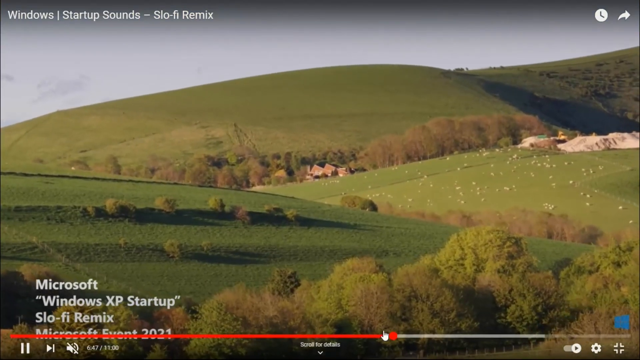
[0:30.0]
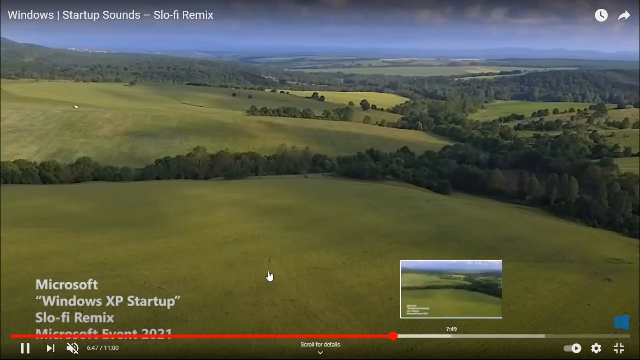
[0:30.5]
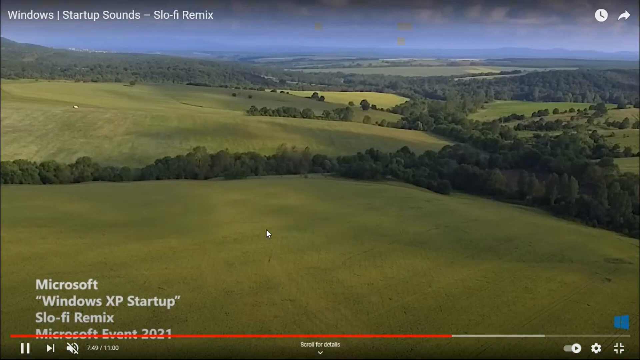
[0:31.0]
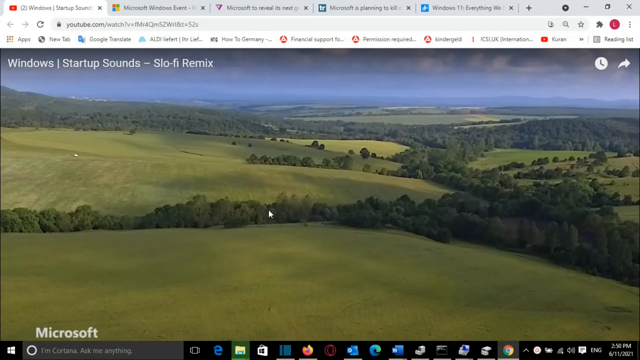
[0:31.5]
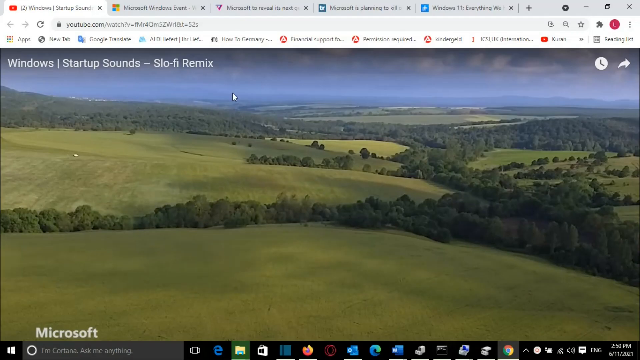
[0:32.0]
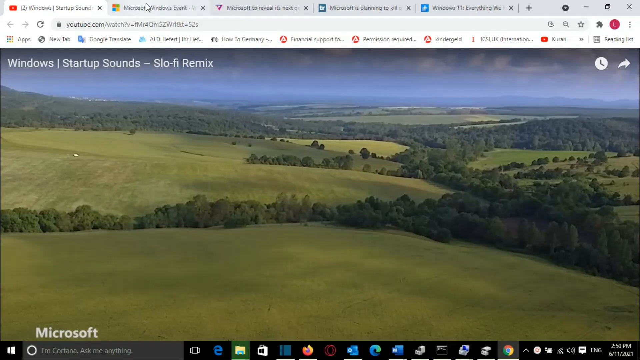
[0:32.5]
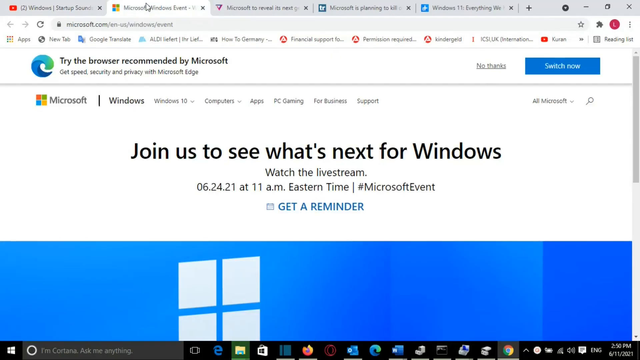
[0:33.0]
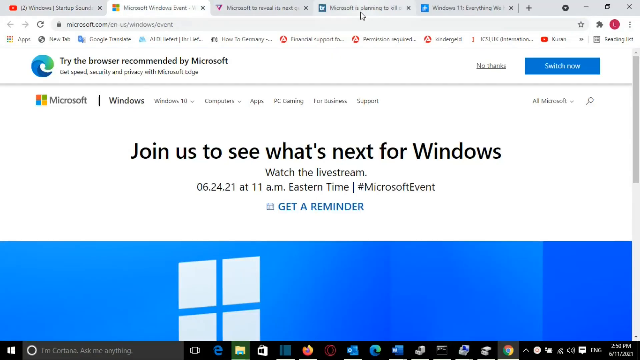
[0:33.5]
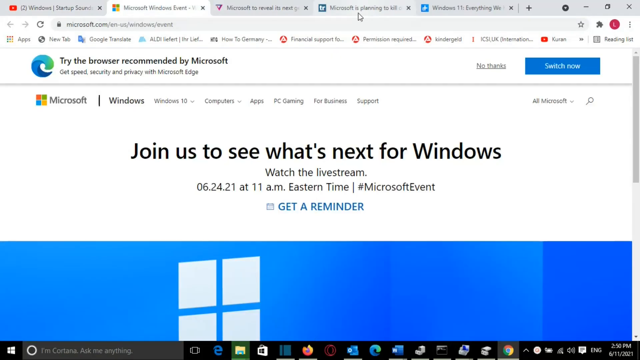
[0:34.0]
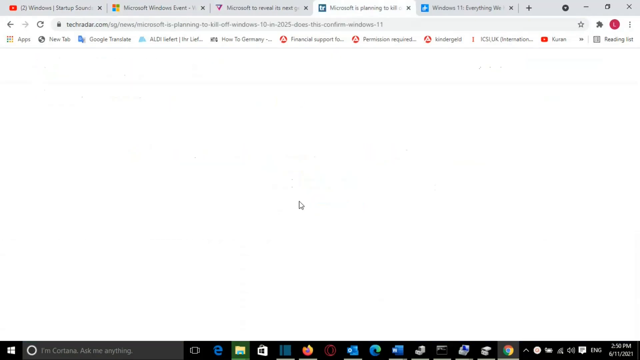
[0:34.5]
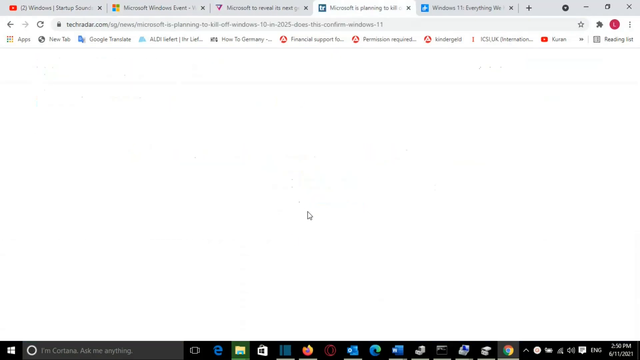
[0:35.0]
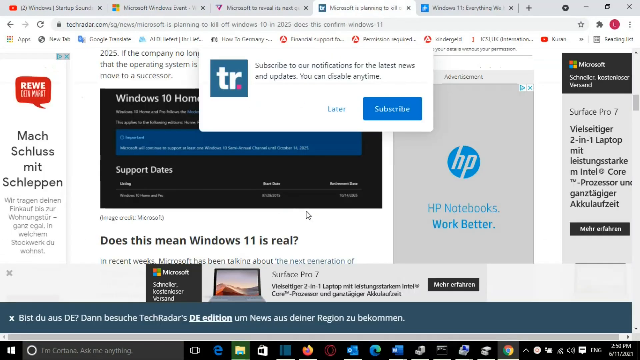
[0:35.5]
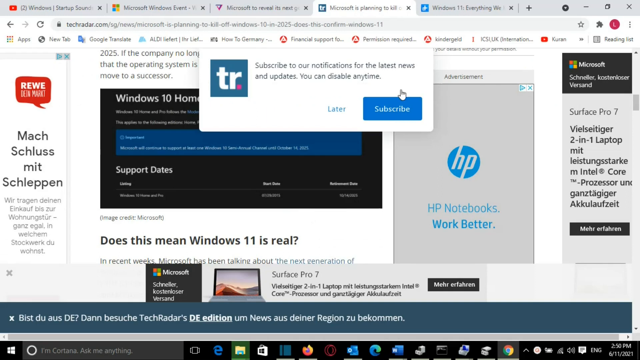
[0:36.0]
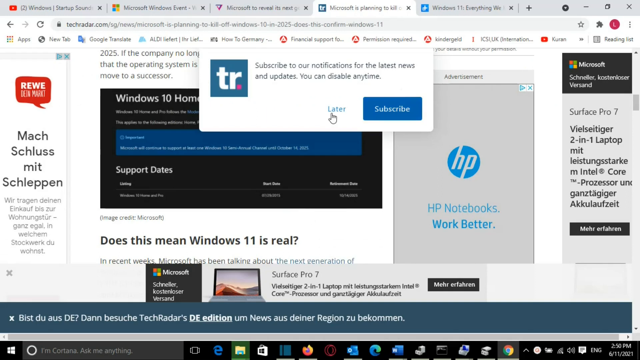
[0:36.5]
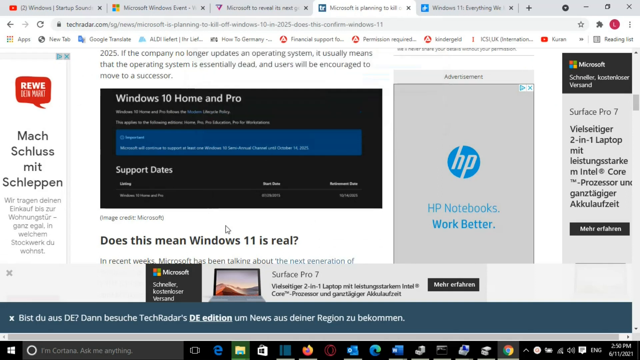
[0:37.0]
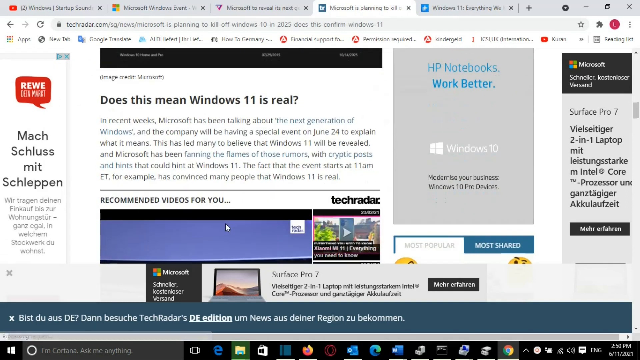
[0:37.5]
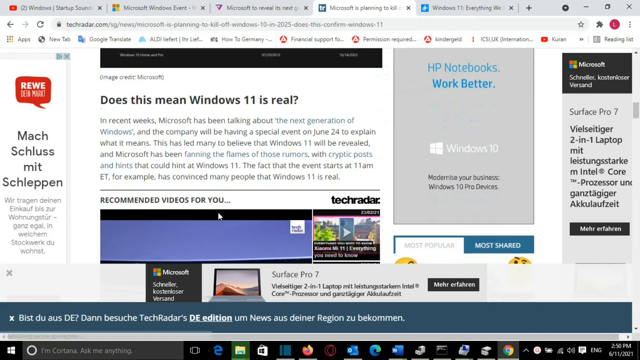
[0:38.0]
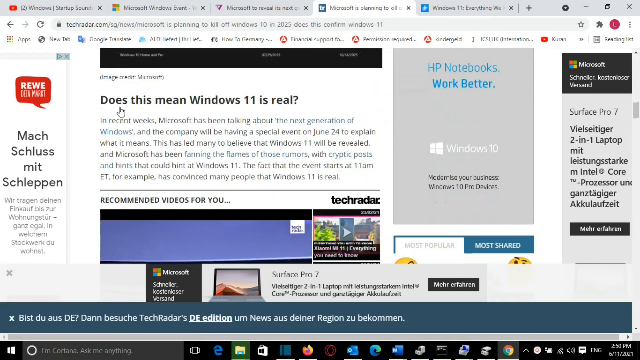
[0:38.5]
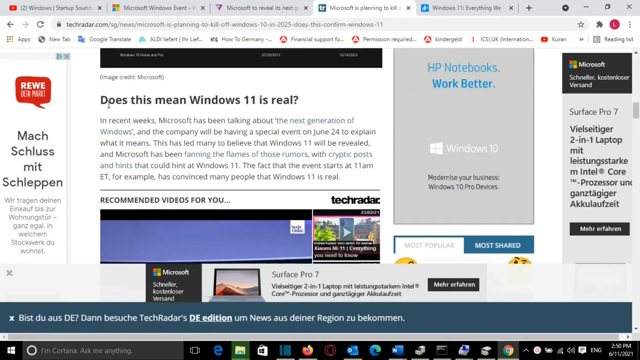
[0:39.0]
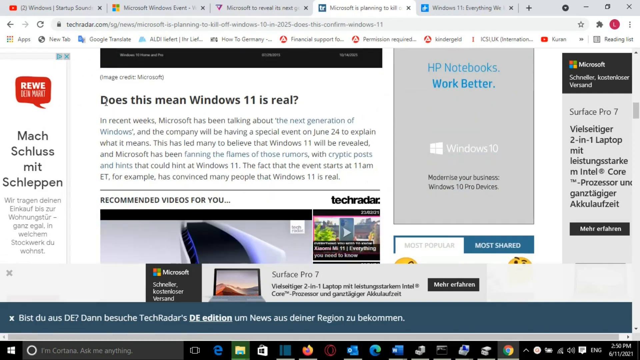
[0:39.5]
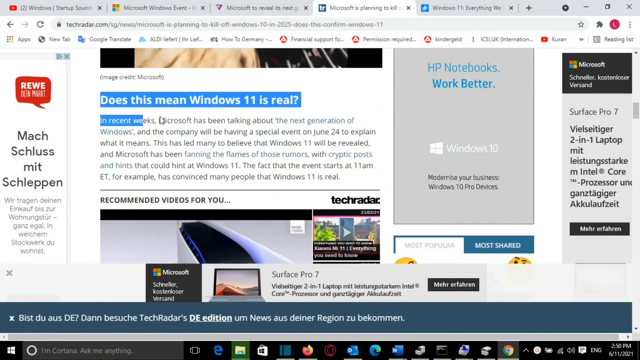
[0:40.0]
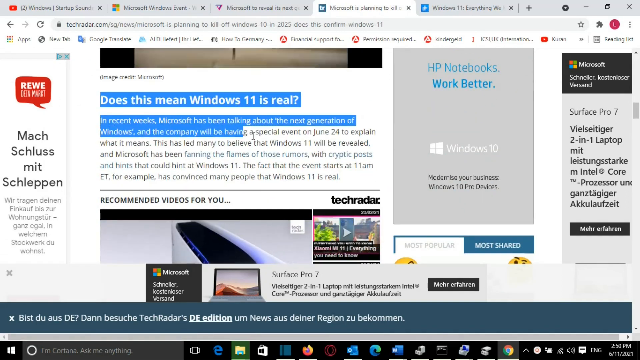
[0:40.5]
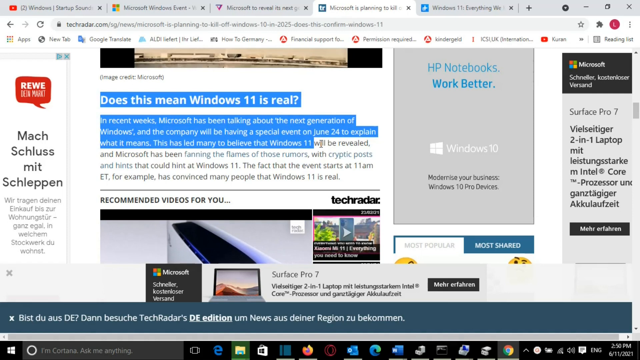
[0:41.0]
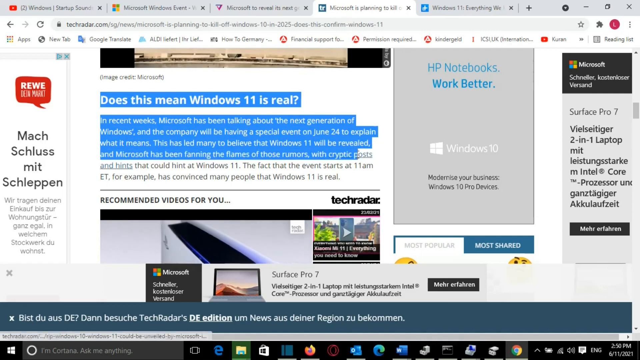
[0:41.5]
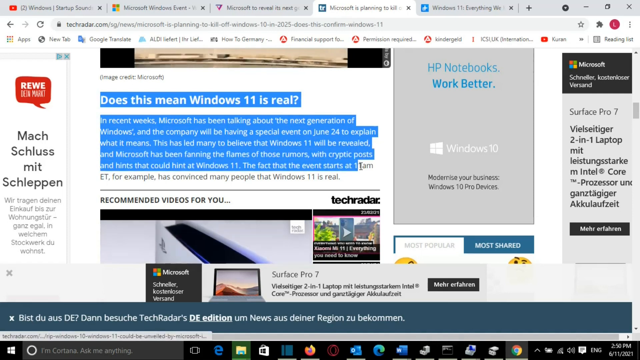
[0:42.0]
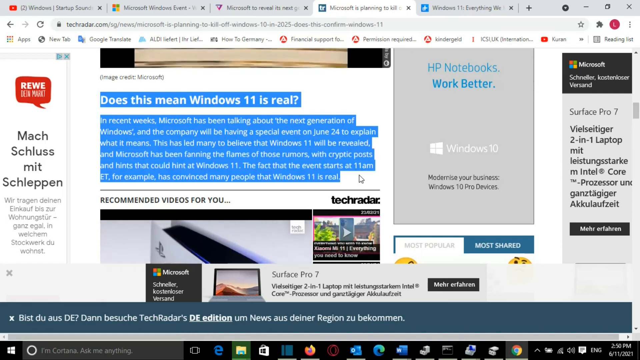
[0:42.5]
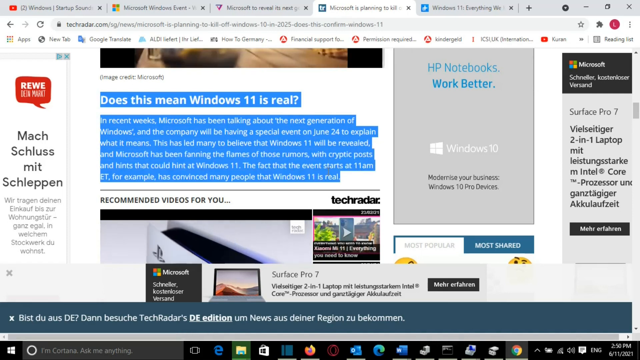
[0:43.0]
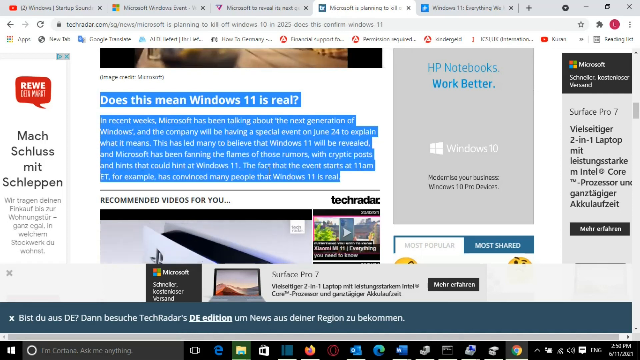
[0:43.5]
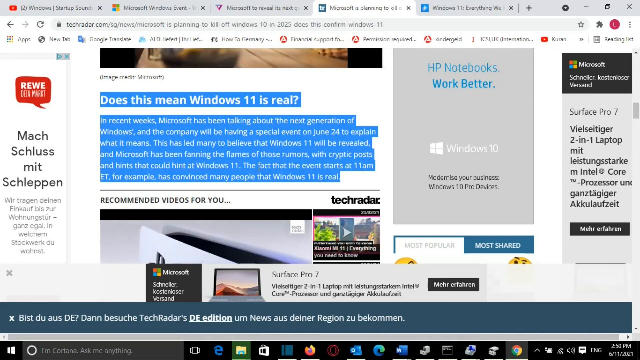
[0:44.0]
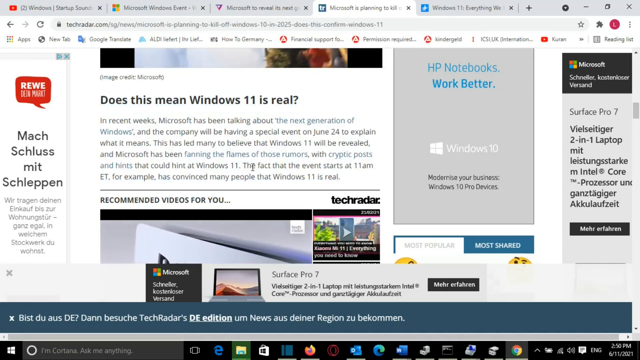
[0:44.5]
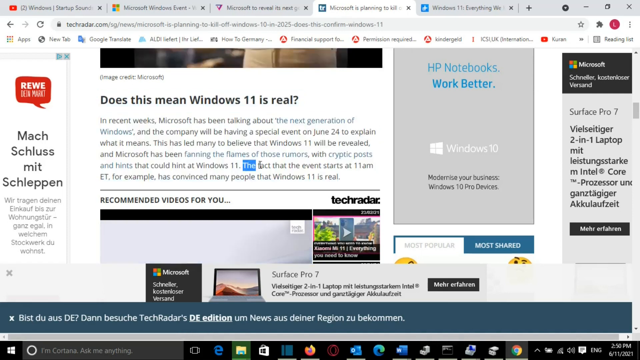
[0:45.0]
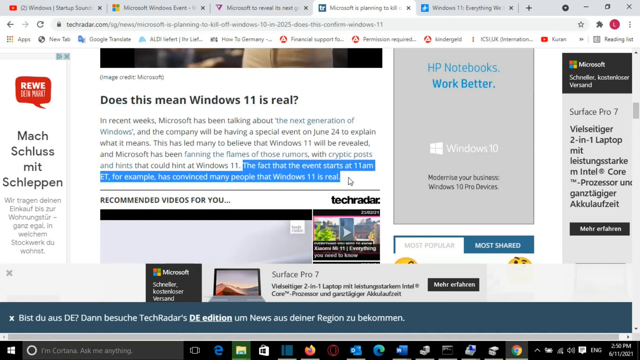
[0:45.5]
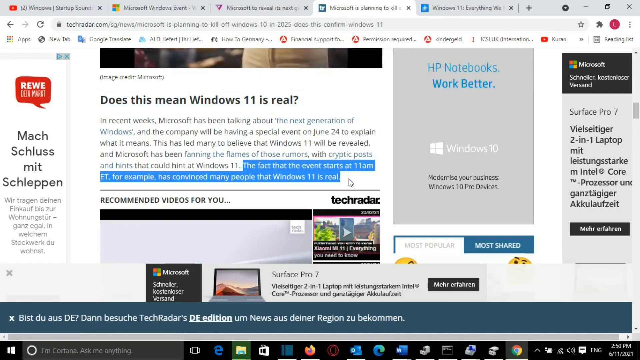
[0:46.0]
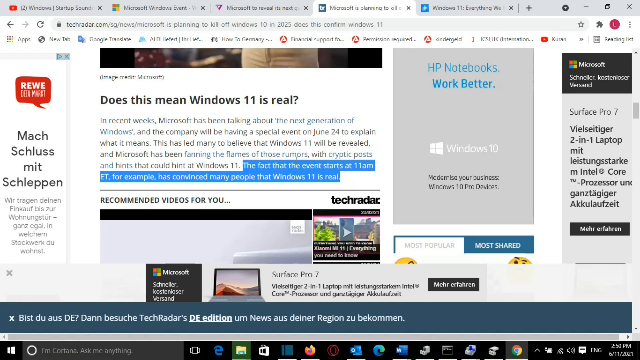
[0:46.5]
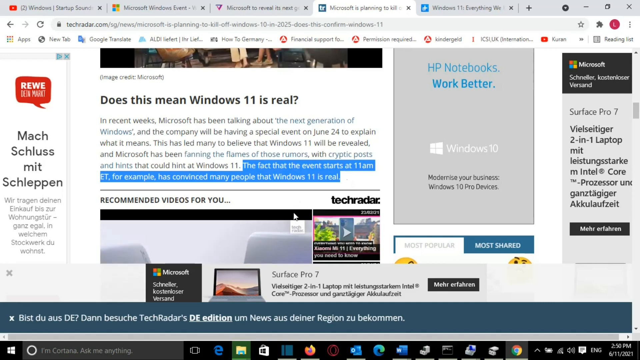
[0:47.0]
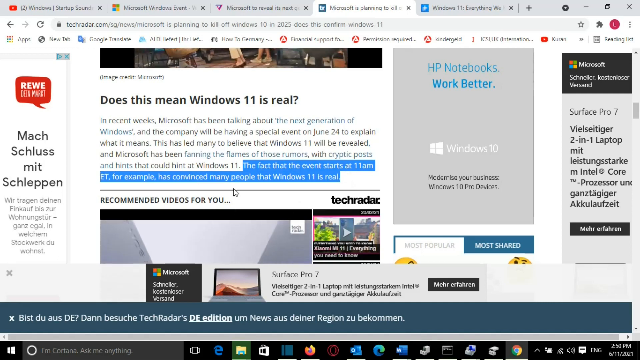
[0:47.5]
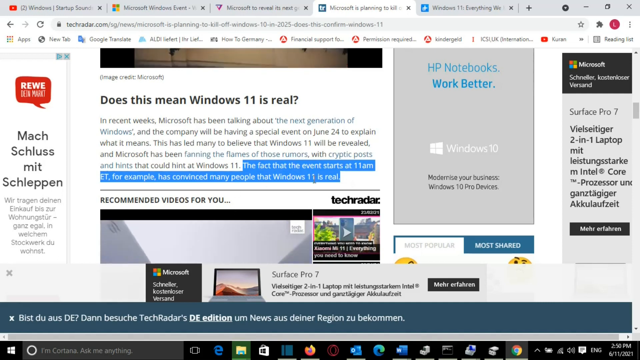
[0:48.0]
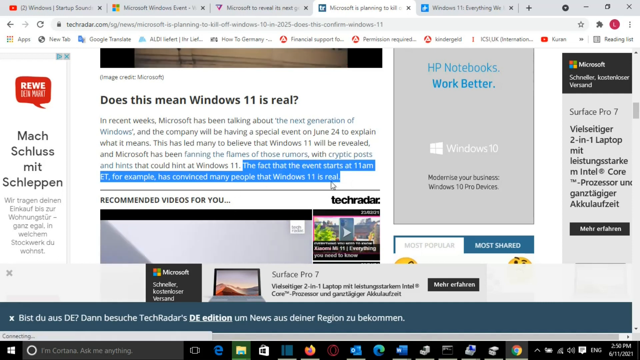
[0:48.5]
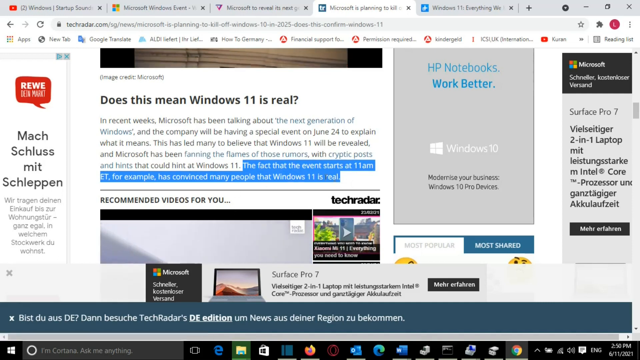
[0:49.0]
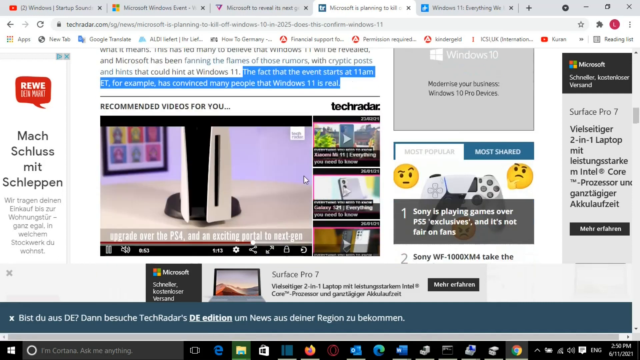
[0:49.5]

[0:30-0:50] A naturalistic view plays in a video. The cursor comes out of the full view, moves toward a different tab and clicks it. The tab refers to Microsoft and appears to be an article. The cursor highlights the words "does this mean Windows 11 is real? In recent weeks, Microsoft has been talking about the next generation of Windows and the company will be having a special event on June 24 to explain what it means. This has led many to believe that Windows 11 will be revealed and Microsoft has been fanning the flames of those rumors with cryptic posts and hints that could hint at Windows 11. The fact that the event starts at 11 a.m. ET, for example, has convinced many people that Windows 11 is real." The cursor then highlights again the sentence "the fact that the event starts at 11 a.m. ET, for example, has convinced many people that Windows 11 is real."